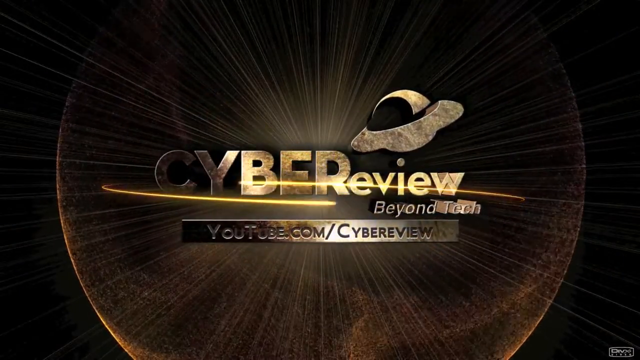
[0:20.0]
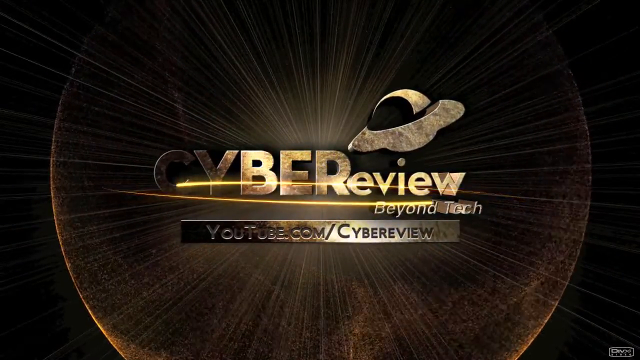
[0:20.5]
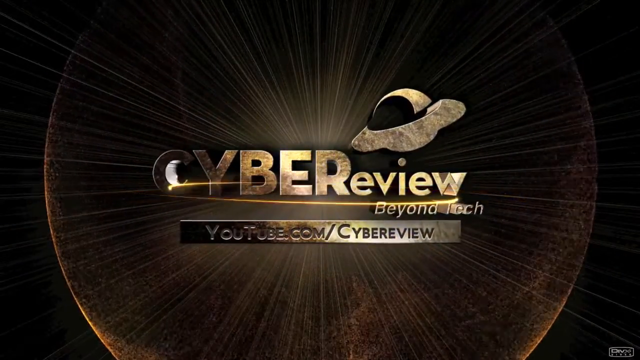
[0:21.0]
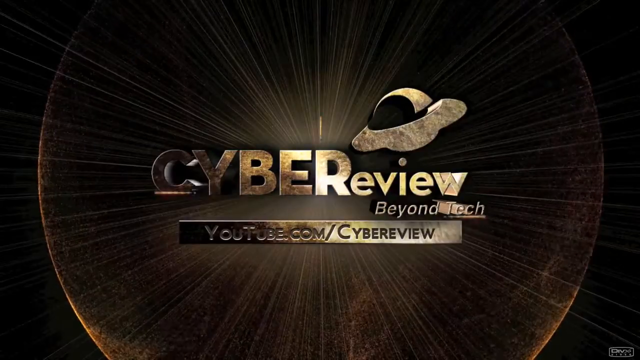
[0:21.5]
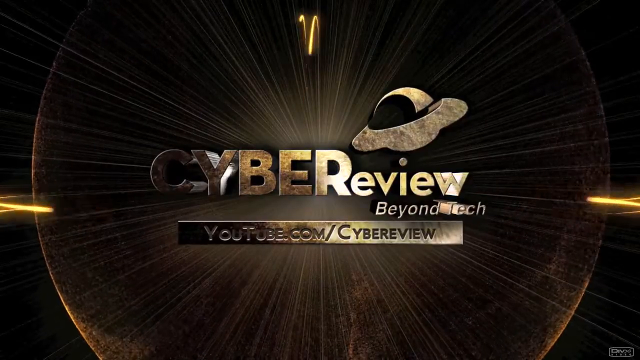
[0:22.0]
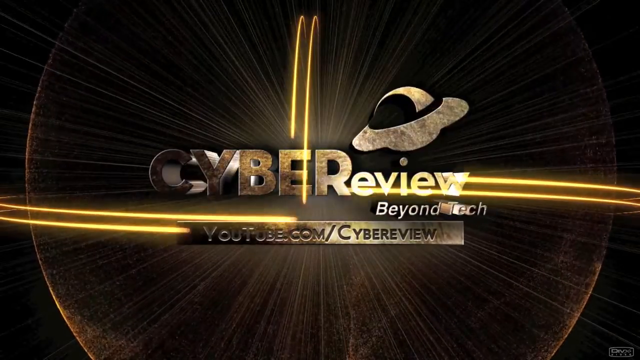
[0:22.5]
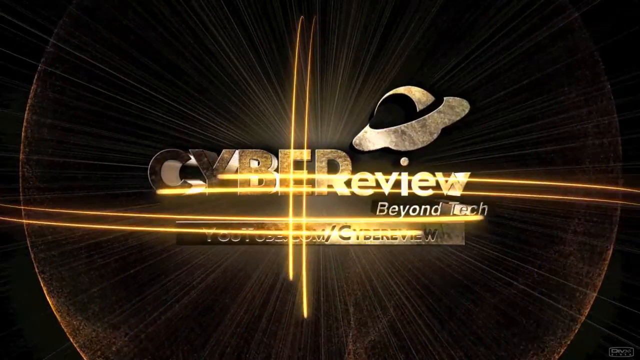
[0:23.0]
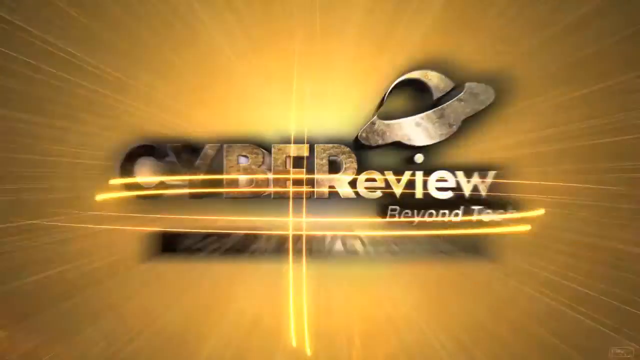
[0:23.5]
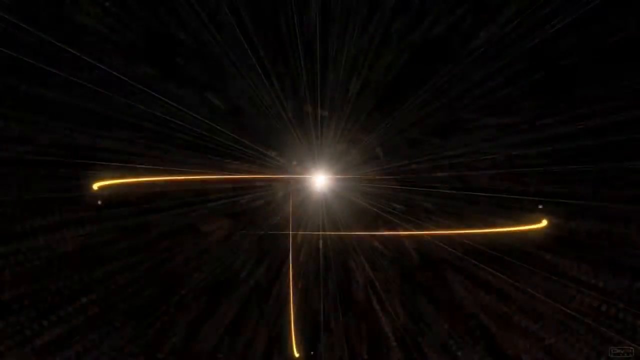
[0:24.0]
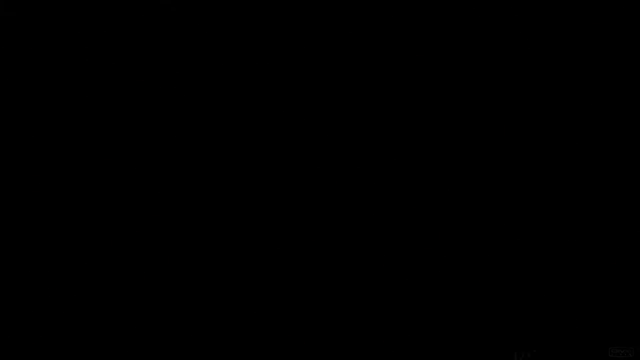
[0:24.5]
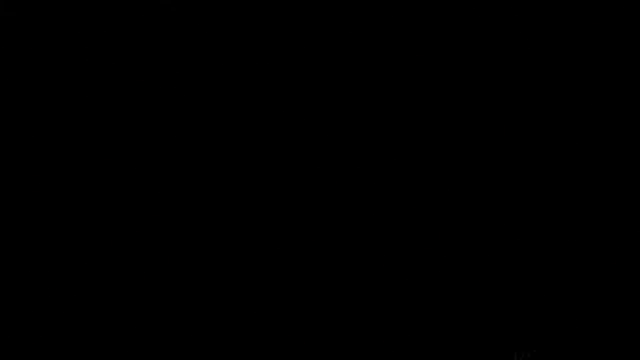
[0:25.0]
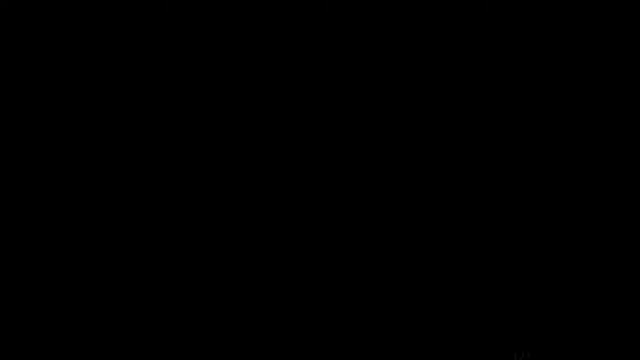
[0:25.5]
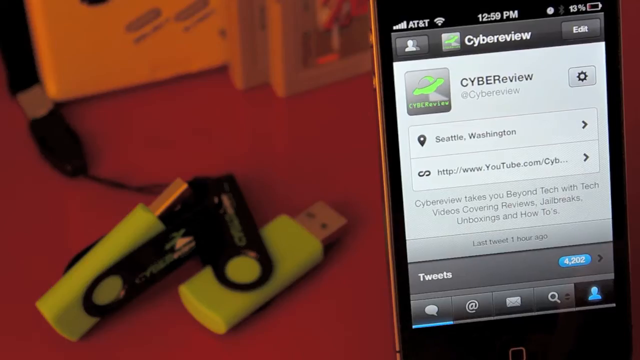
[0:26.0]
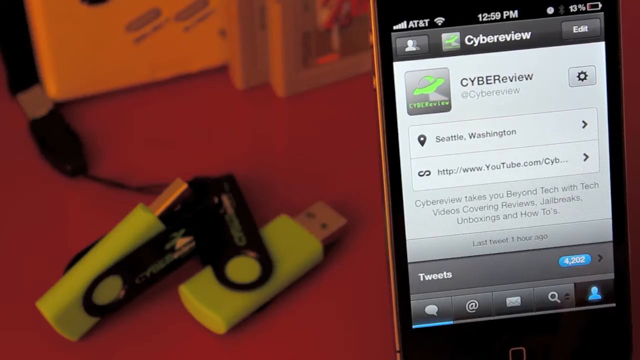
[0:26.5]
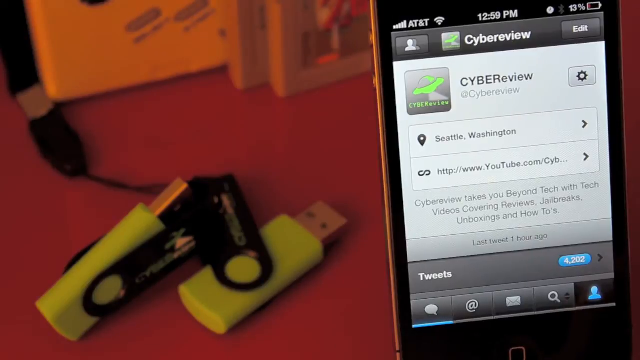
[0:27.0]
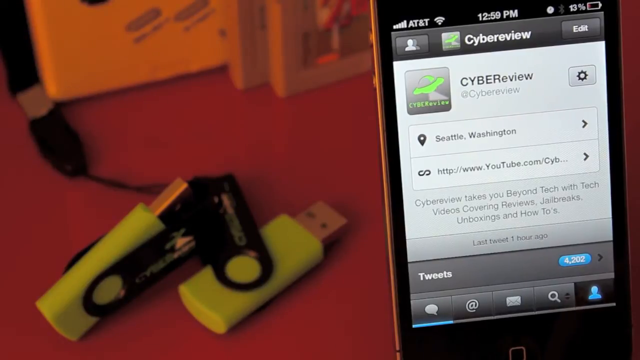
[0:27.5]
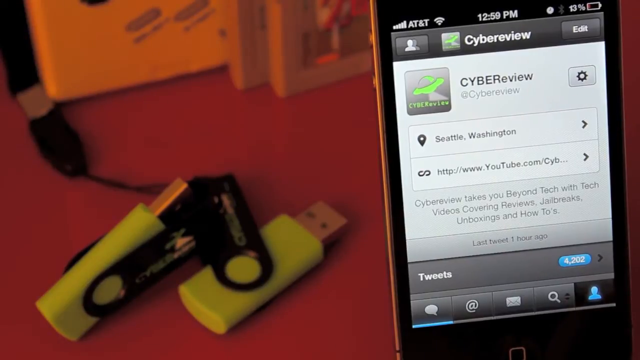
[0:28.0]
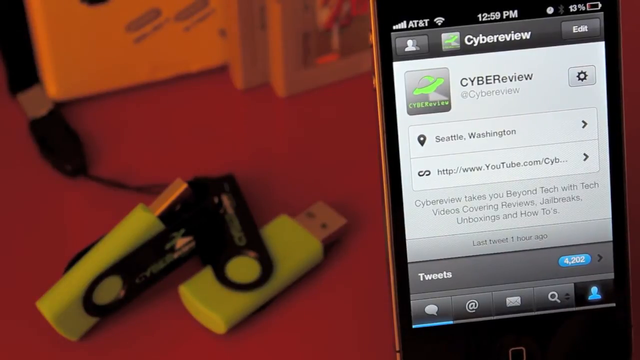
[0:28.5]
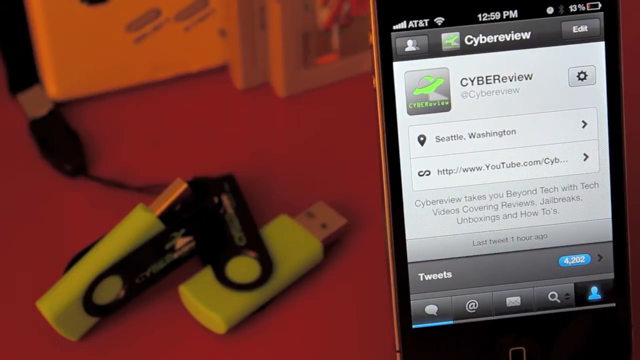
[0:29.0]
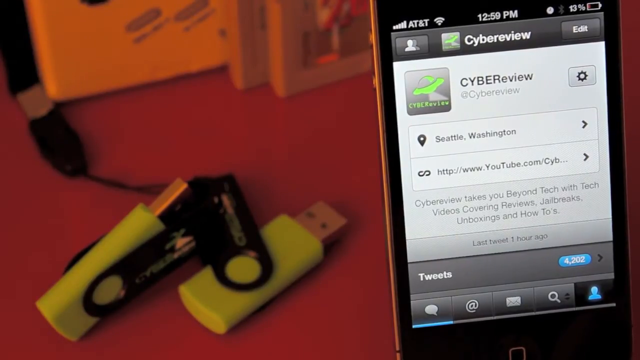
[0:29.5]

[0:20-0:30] An image of a planet appears with light bursting out from behind or from the planet and through an image that says "cyber review" with a tagline. The cyber review title looks to have rings around it, kind of like the rings of Saturn, going through and around it. Underneath is a steel, metal-looking plaque that says "youtube.com/cyber view," and above the whole title is a small image of a spaceship. The light starts spinning, the planet grows, and the image flashes and goes back.